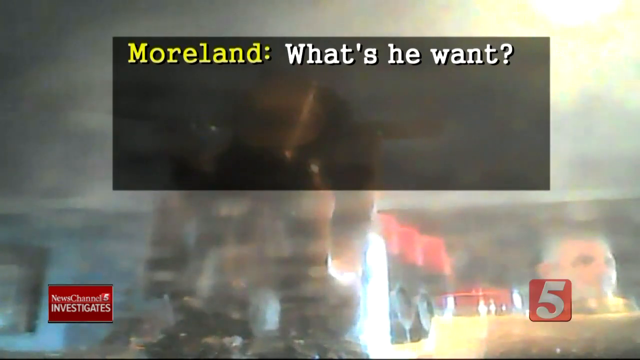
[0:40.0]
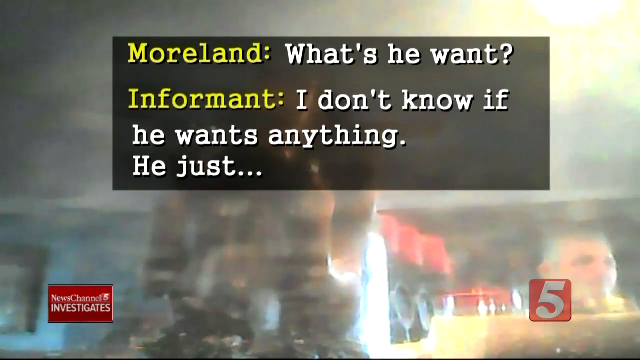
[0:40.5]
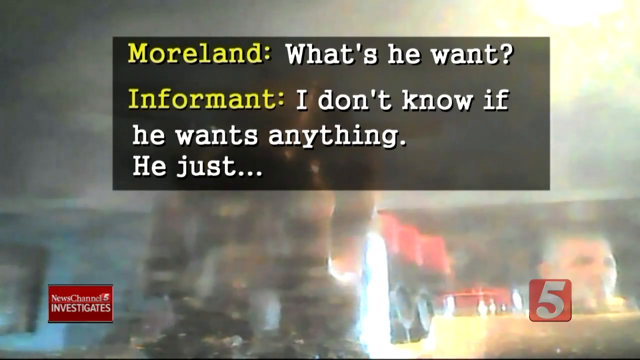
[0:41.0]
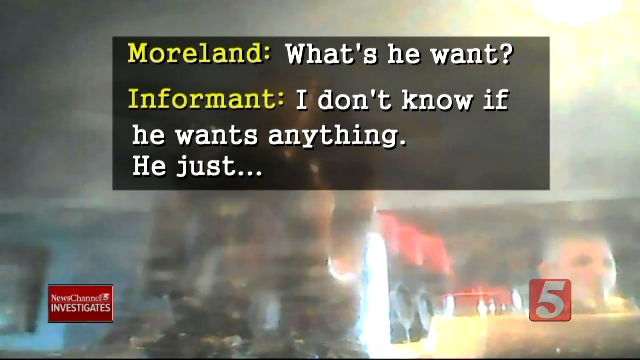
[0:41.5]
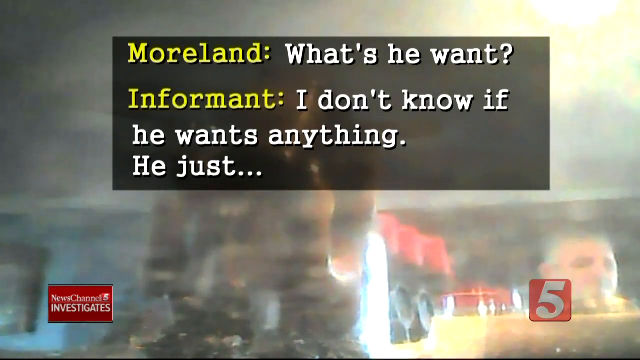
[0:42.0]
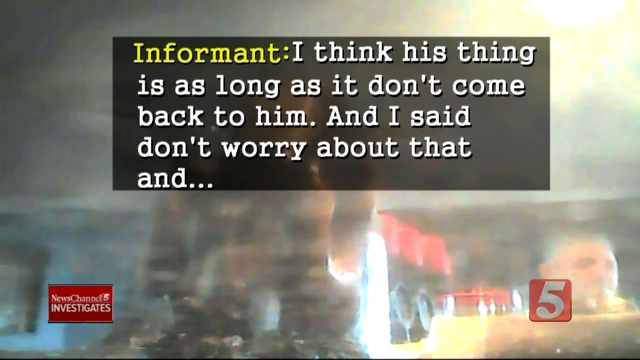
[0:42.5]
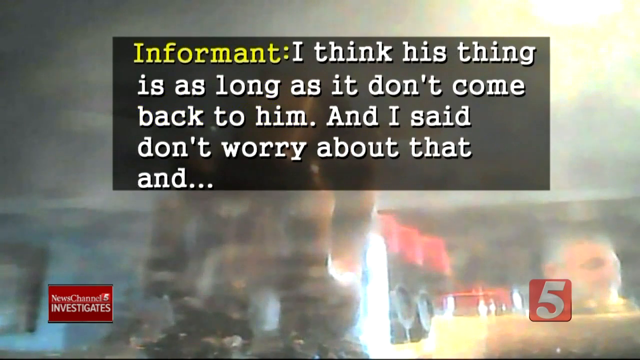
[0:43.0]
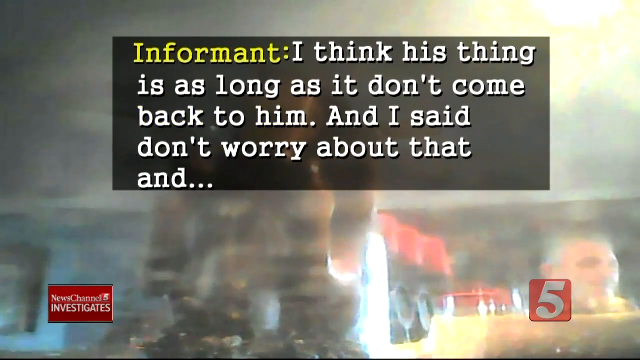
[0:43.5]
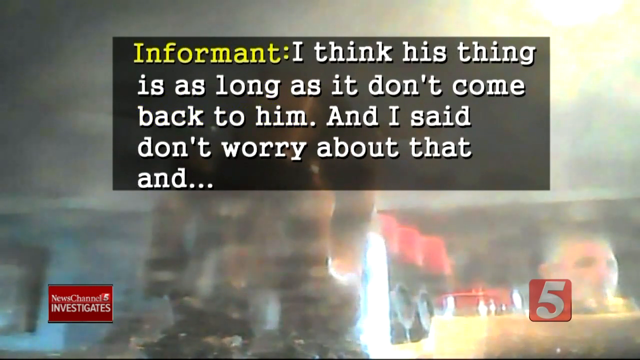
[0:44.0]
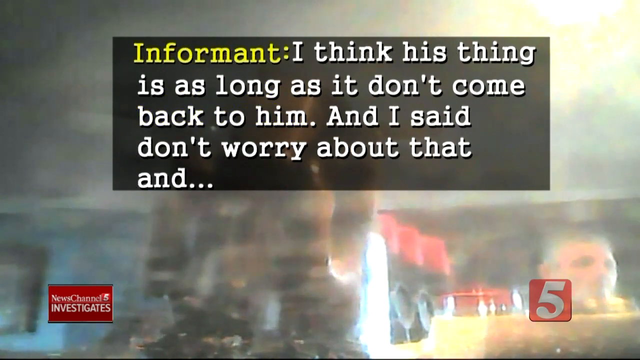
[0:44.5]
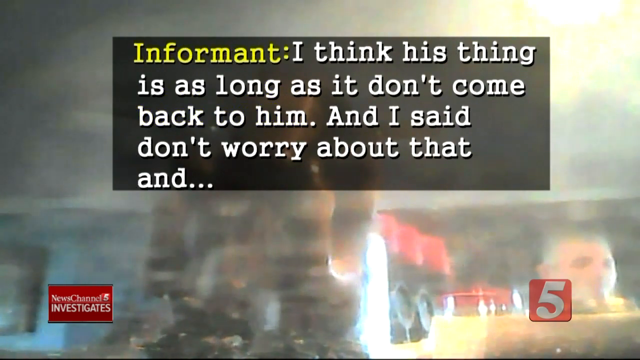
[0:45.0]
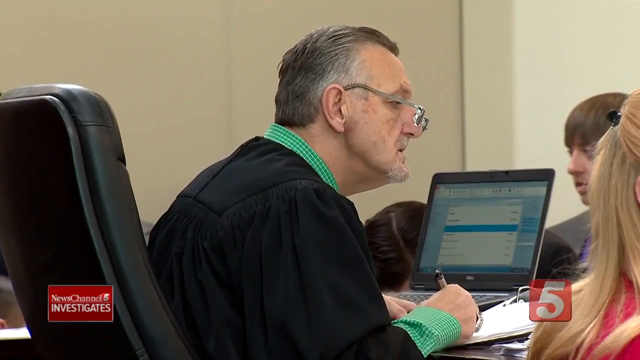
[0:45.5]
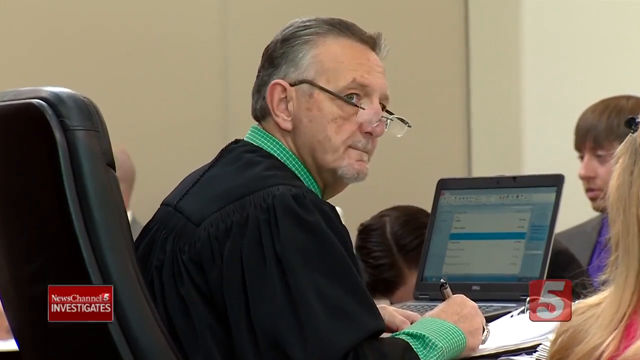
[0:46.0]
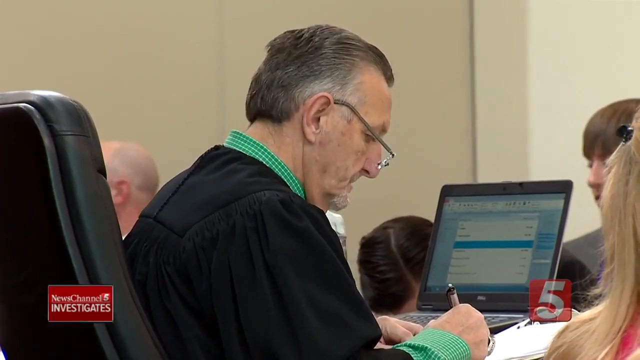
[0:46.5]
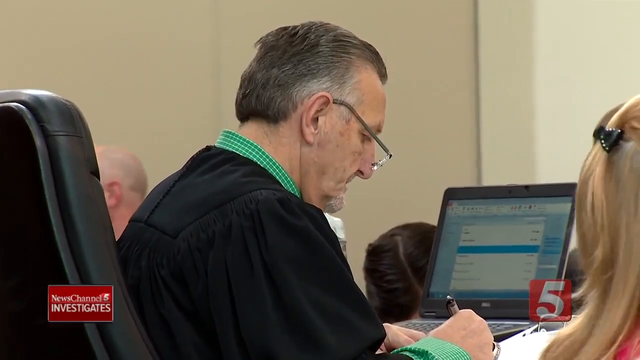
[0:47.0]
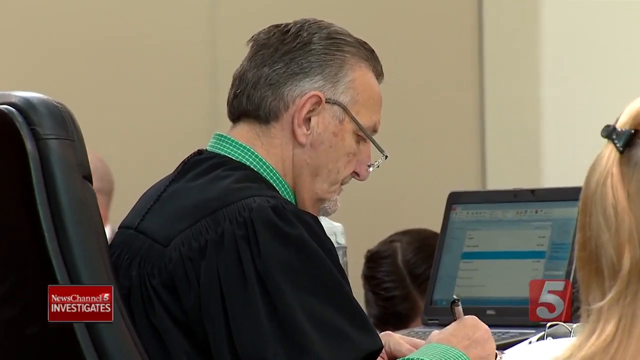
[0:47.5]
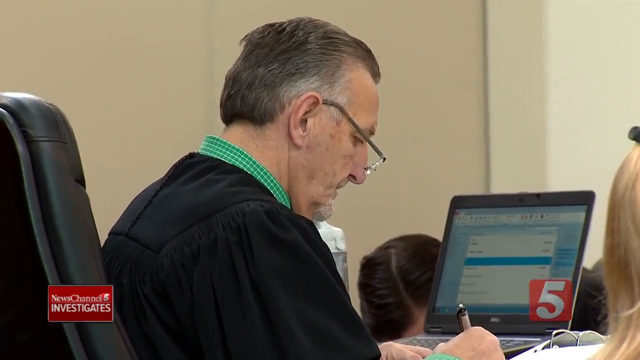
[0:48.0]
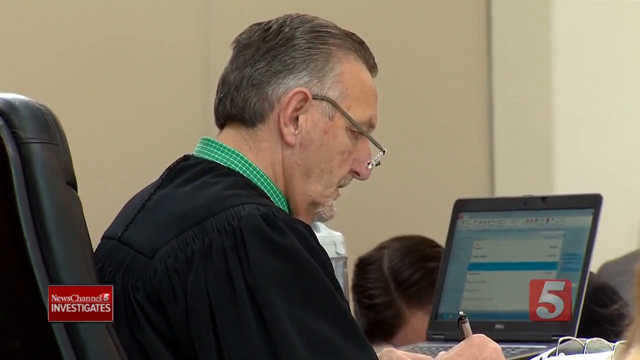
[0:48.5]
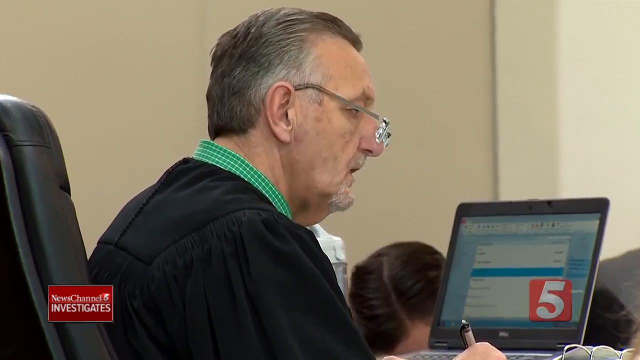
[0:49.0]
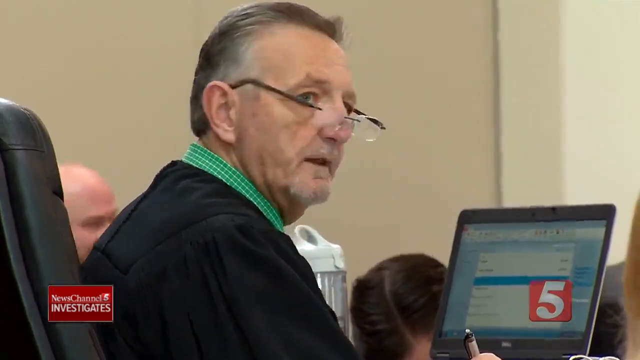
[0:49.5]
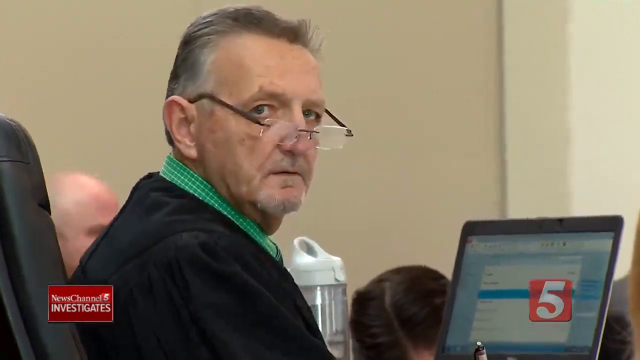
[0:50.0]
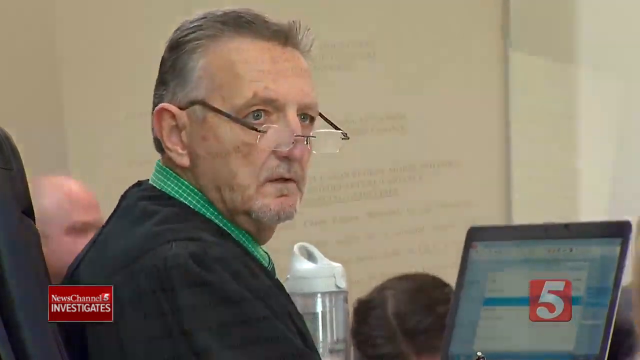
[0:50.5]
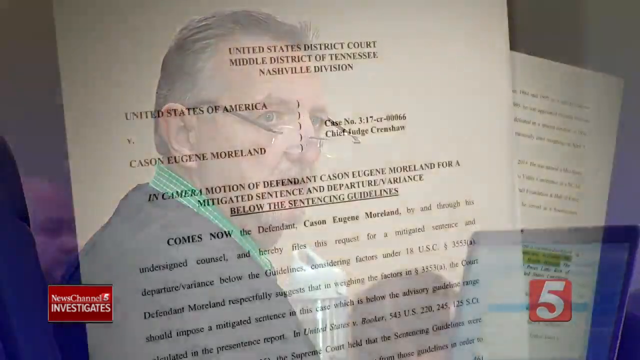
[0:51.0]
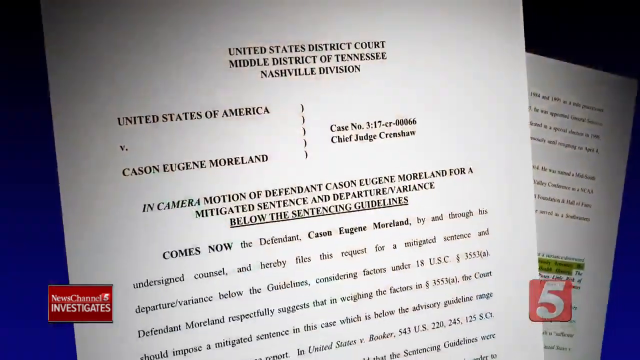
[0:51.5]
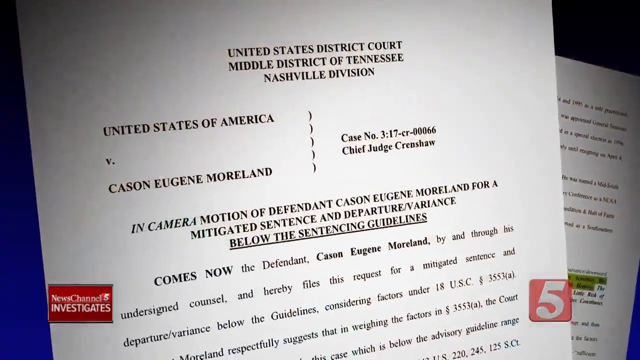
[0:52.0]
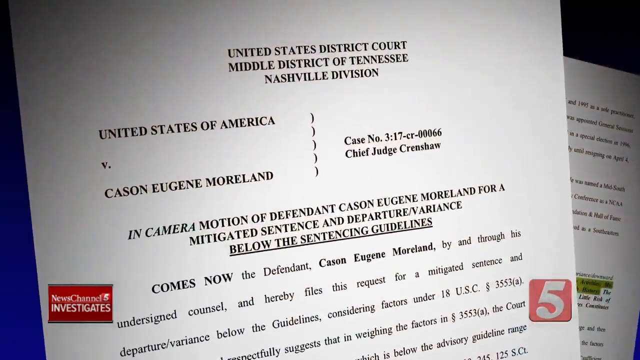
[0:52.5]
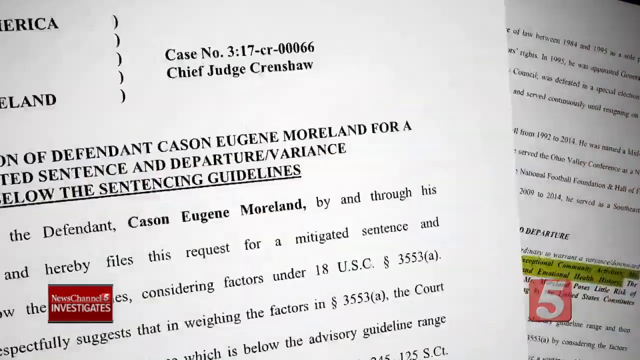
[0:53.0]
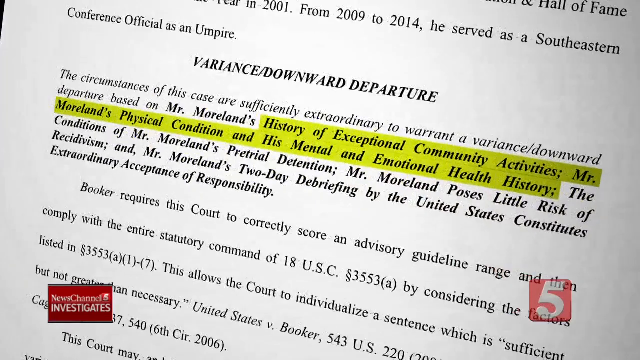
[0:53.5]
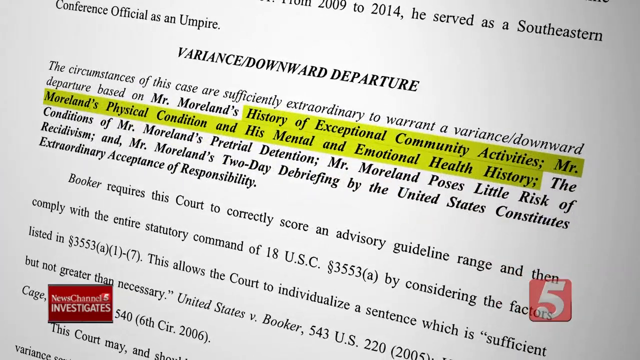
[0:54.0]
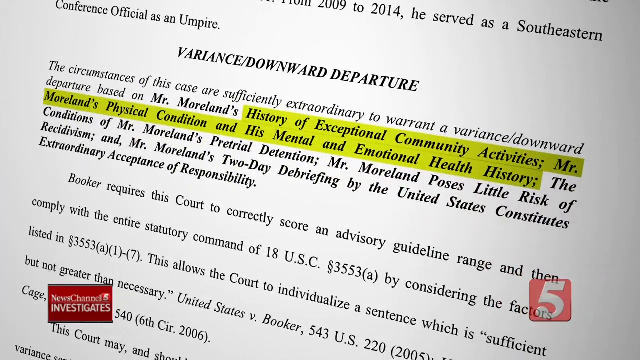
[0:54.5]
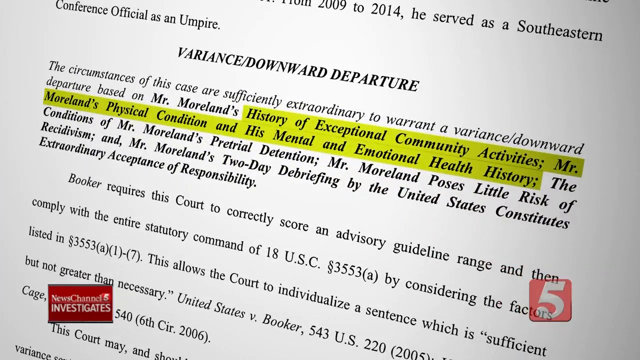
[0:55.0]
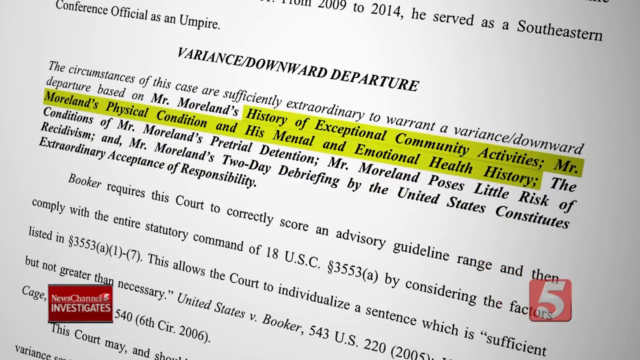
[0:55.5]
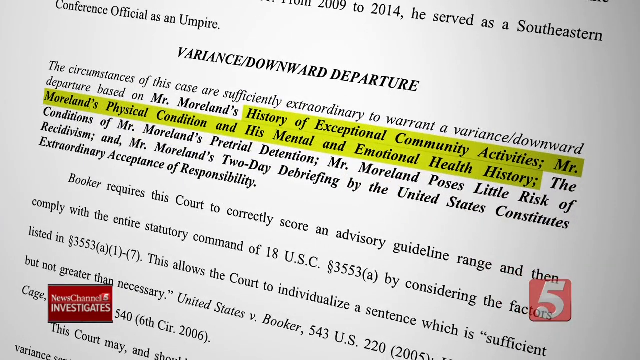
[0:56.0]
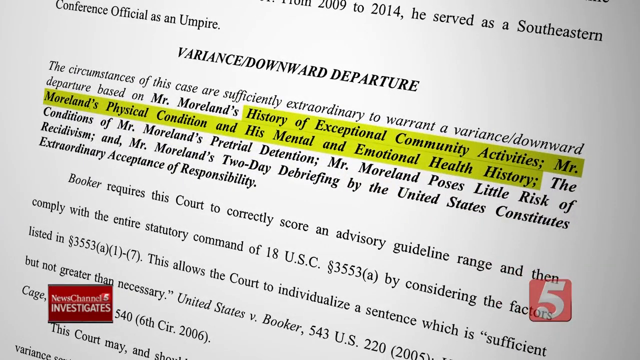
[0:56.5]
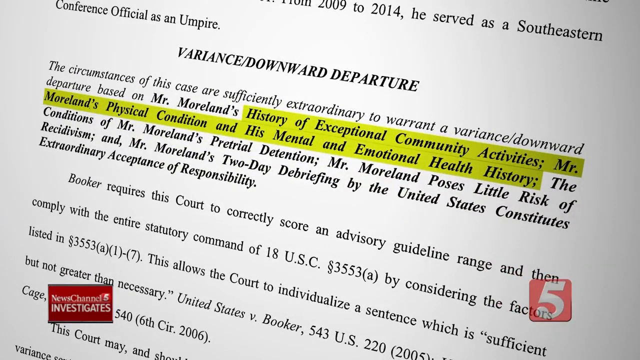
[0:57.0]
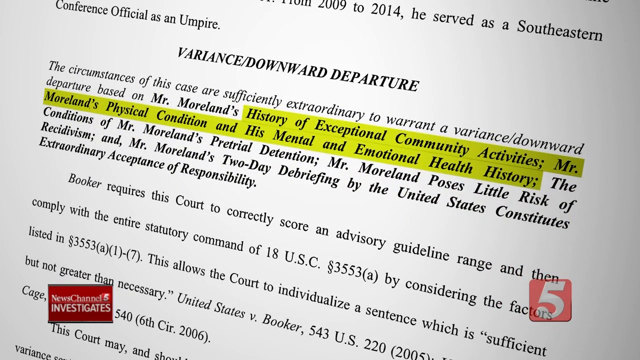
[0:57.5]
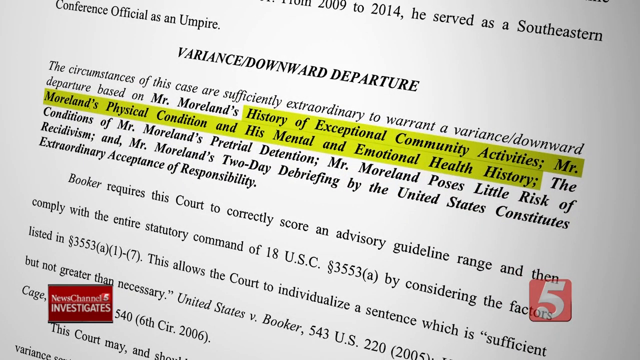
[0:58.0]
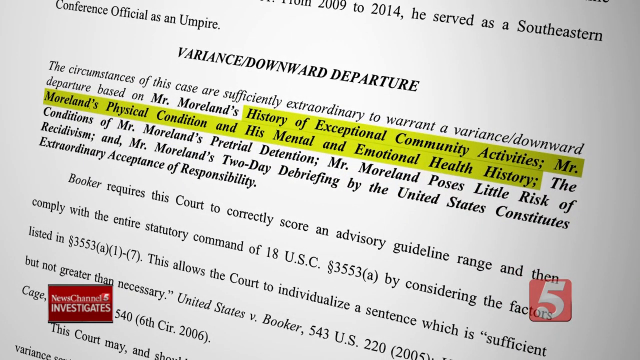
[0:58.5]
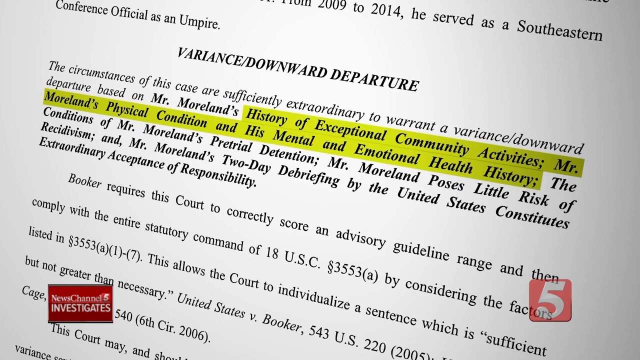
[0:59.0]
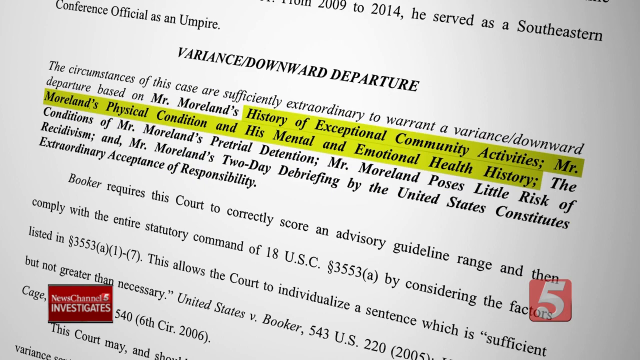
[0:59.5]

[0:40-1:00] Following Moreland's question, the yellow word "Informant" appears, indicating an informant is speaking, followed by the statement "I don't know if he wants anything. He just ... I think his thing is as long as it don't come back to him. And I said, don't worry about that and..." The judge is then shown from behind, still wearing his glasses on the tip of his nose and the black robe, with a green, small-checkered, long-sleeved shirt visible under the robe. To his right is the back of the head of a blonde woman with a hair clasp; mostly only her hair and part of her ear are visible. The judge has a laptop open, showing a smaller screen with a blue highlighted line among a series of other lines. He turns to his right and begins writing with his right hand, then looks up and turns to the right, almost facing the camera, and begins speaking. A legal document is then shown reading "United States v. Cason Eugene Moreland", captioned "In-camera motion of defendant, Cason Eugene Moreland, for a mitigated sentence and departure variance below the sentencing guidelines". The camera switches to a page in the document with highlighted text reading "History of Exceptional Community Activities, Mr. Moreland's Physical Condition, and his Mental and Emotional Health History".